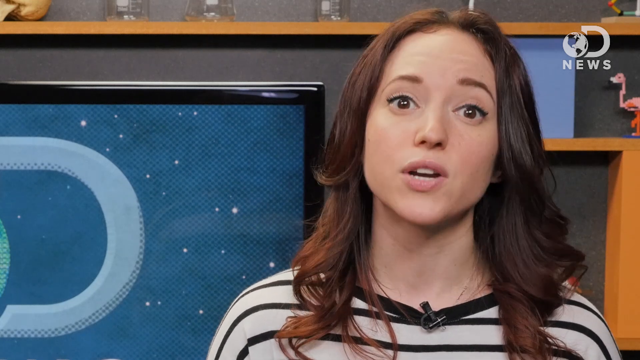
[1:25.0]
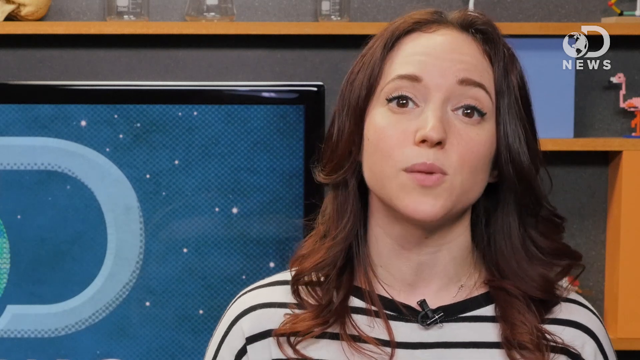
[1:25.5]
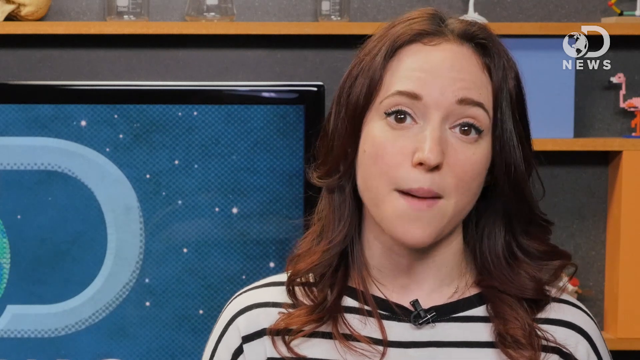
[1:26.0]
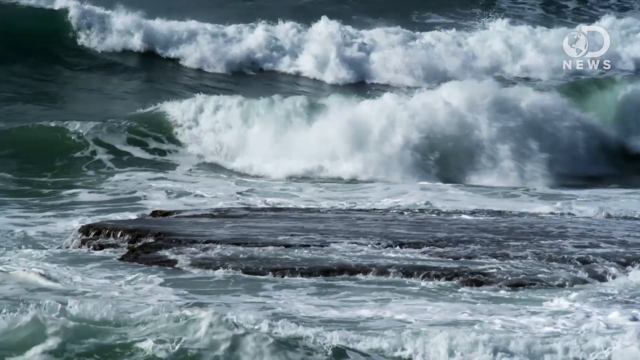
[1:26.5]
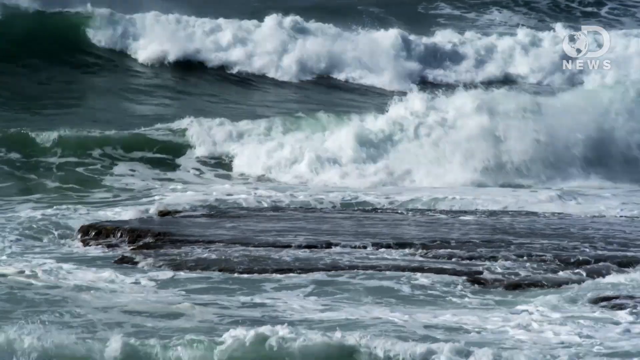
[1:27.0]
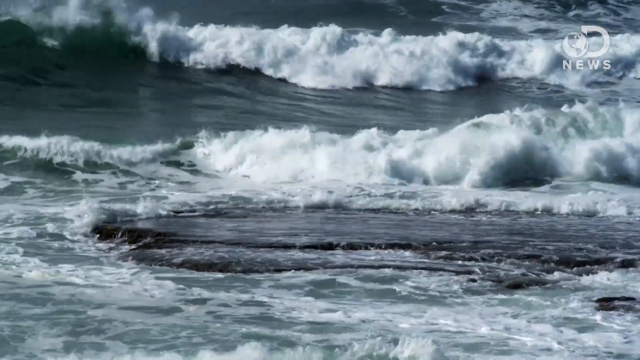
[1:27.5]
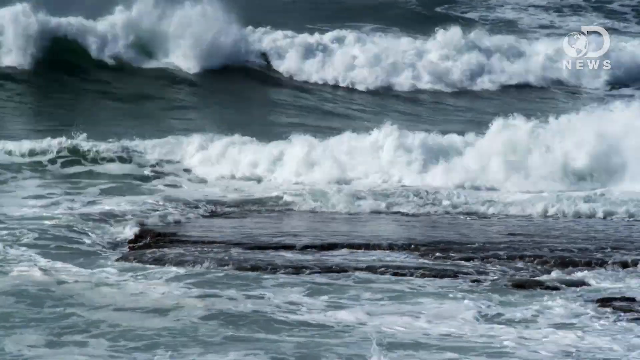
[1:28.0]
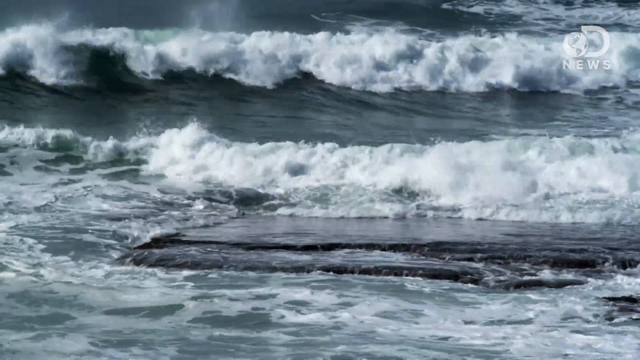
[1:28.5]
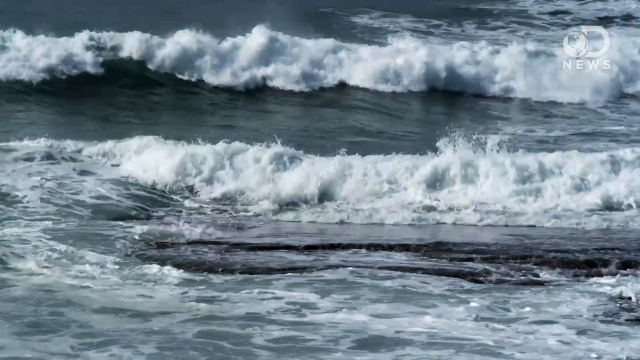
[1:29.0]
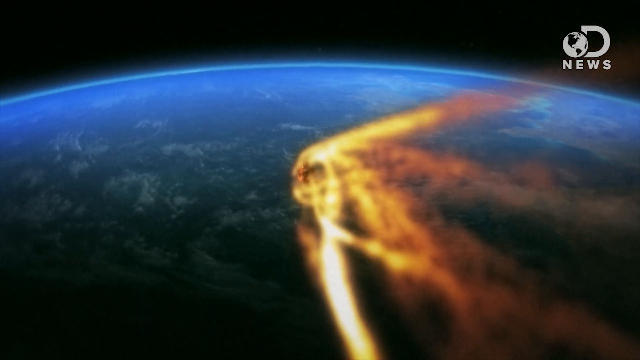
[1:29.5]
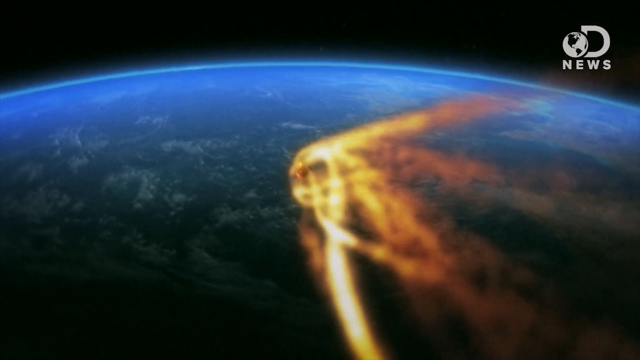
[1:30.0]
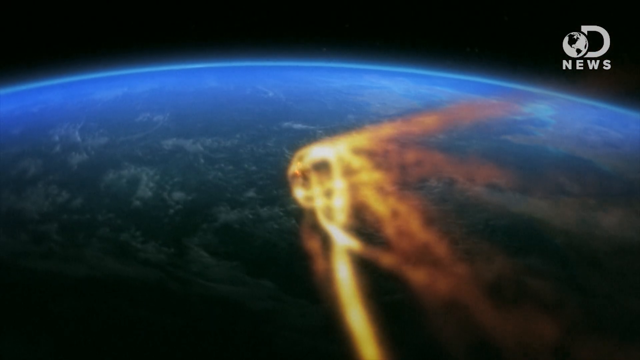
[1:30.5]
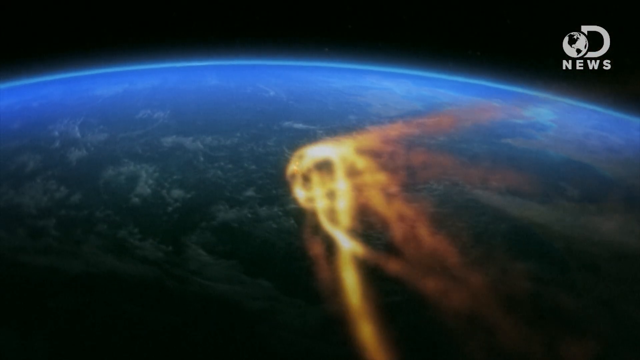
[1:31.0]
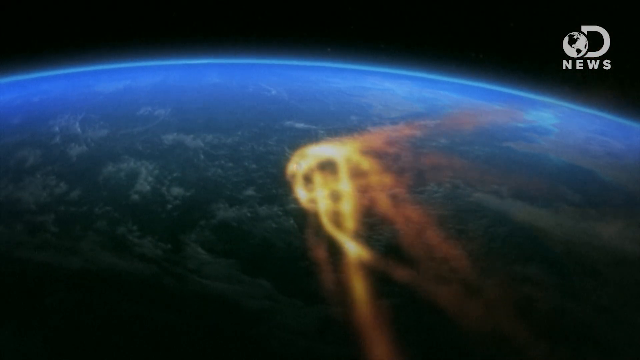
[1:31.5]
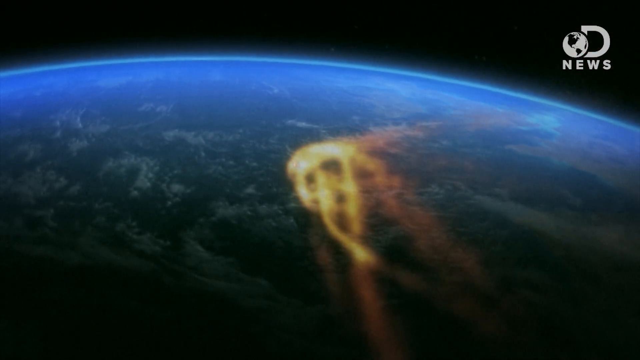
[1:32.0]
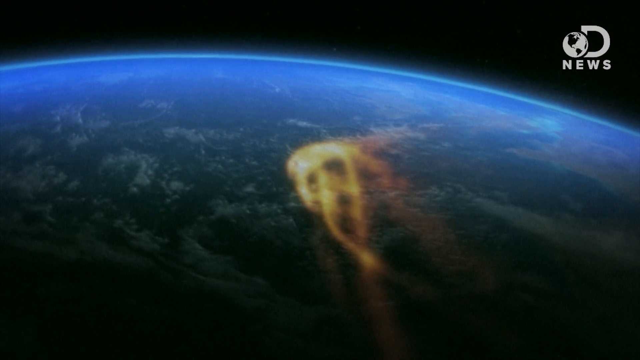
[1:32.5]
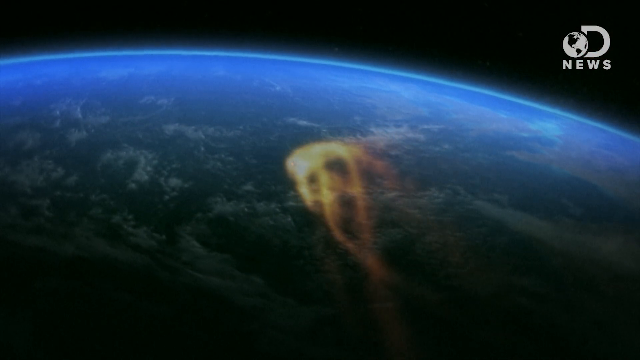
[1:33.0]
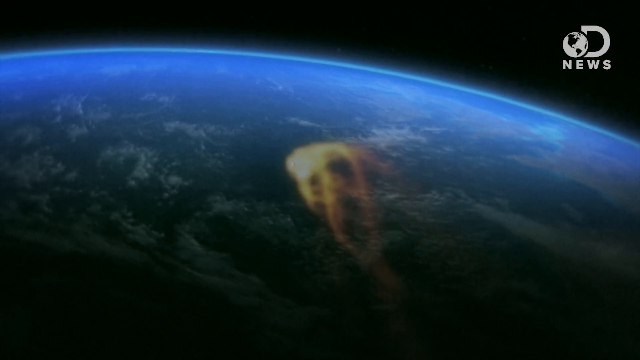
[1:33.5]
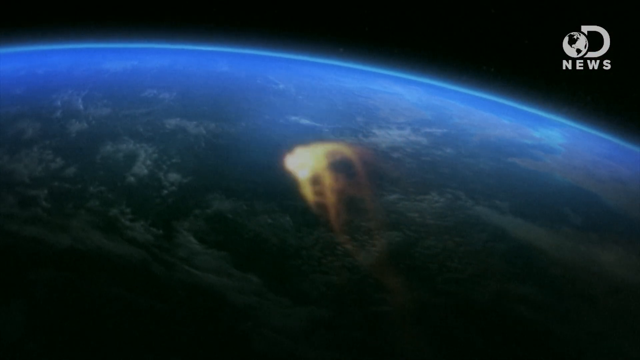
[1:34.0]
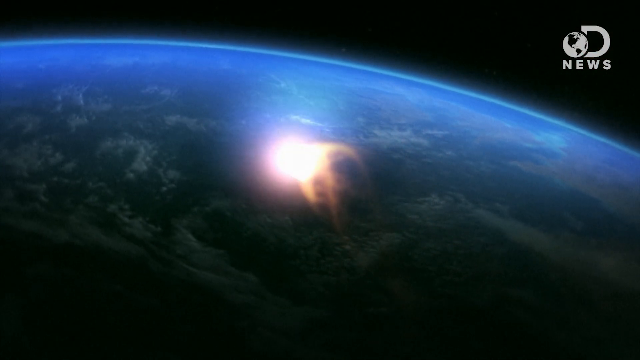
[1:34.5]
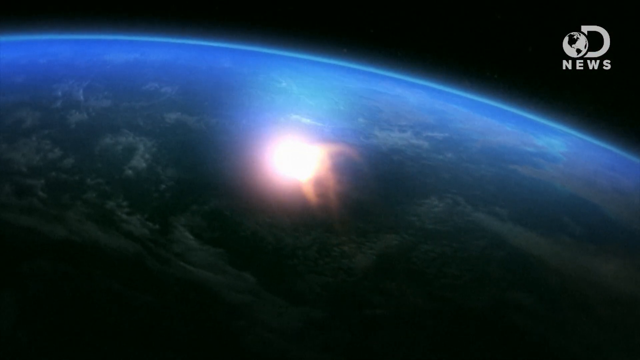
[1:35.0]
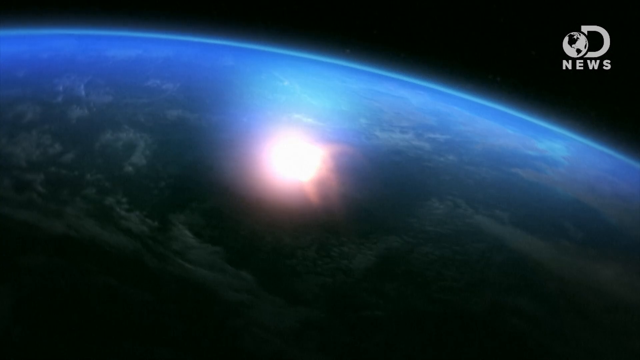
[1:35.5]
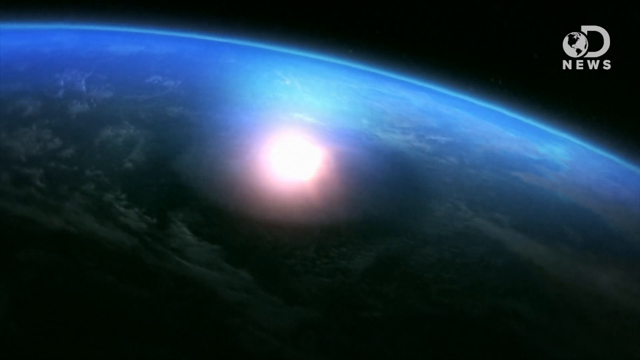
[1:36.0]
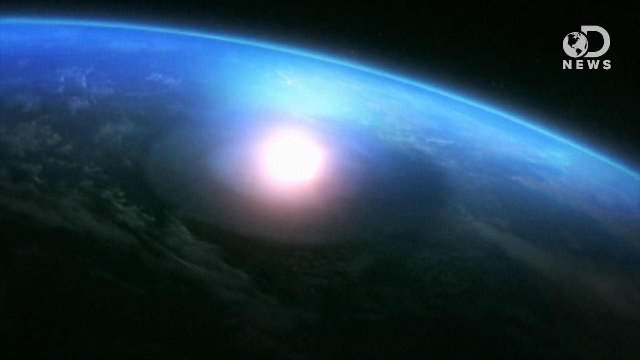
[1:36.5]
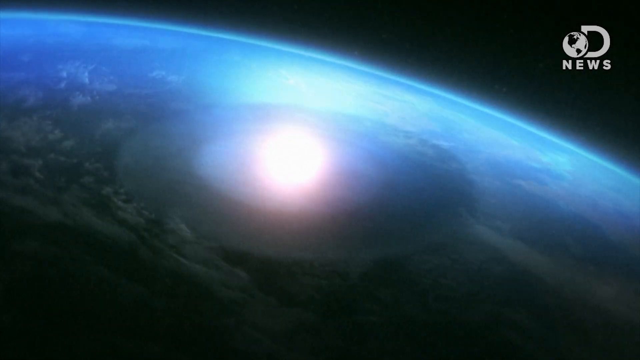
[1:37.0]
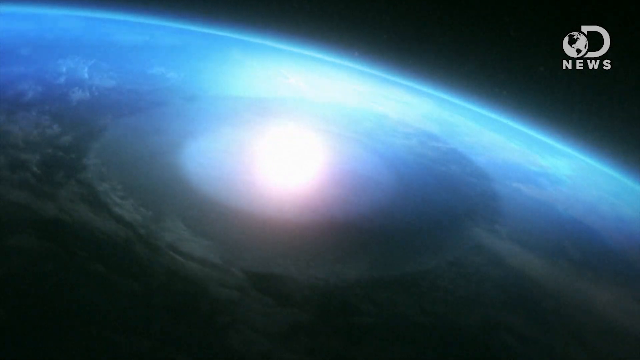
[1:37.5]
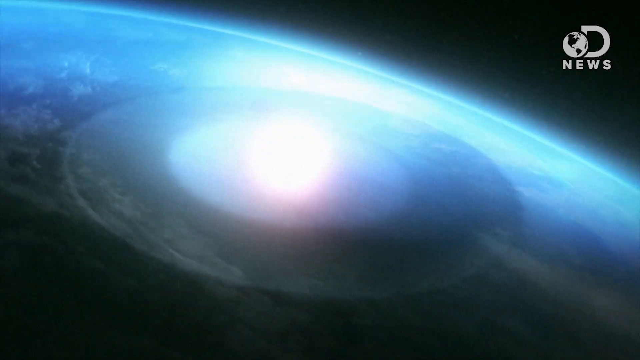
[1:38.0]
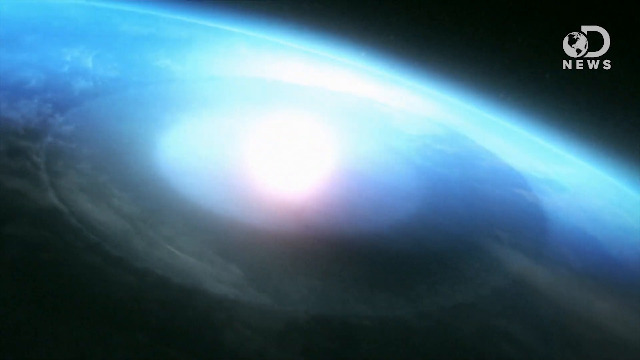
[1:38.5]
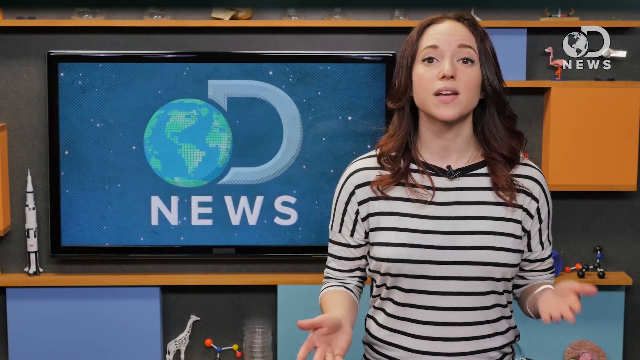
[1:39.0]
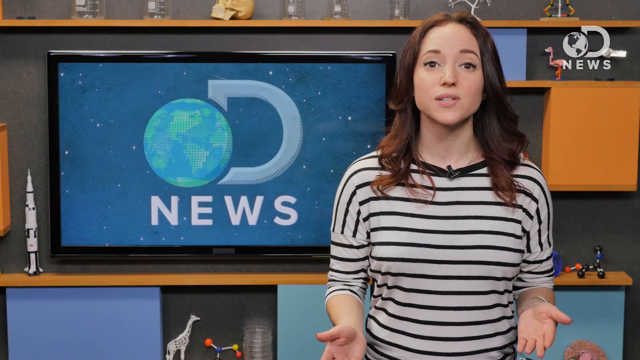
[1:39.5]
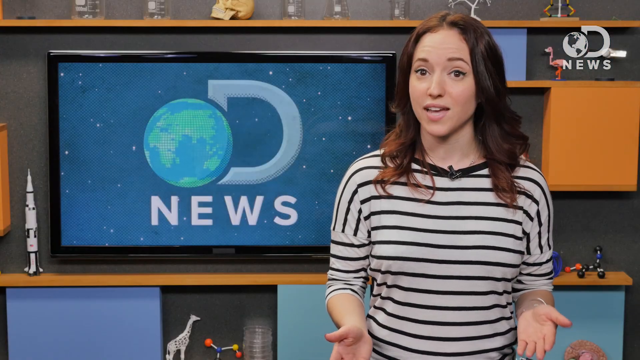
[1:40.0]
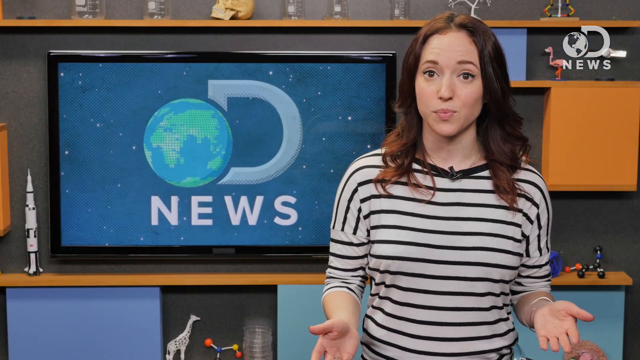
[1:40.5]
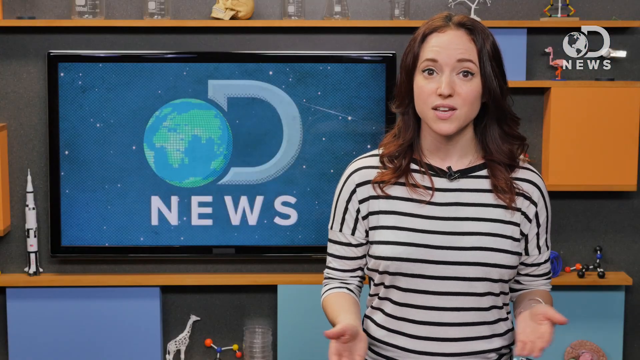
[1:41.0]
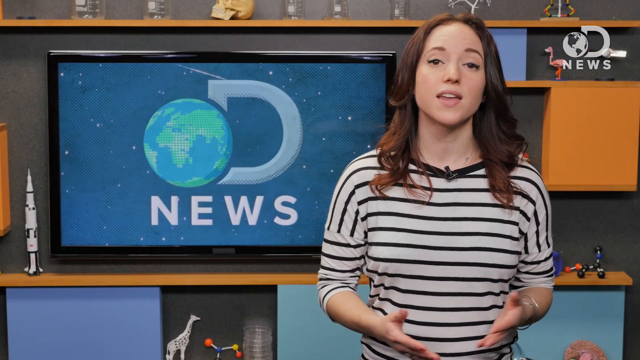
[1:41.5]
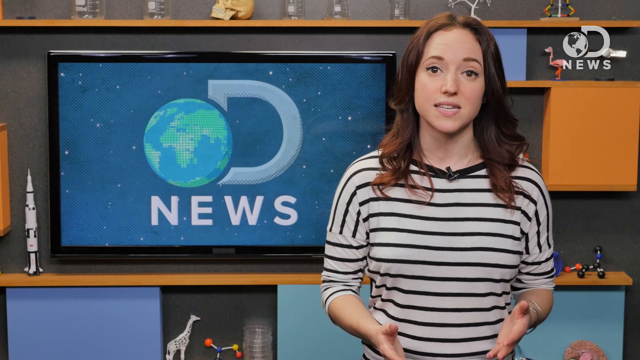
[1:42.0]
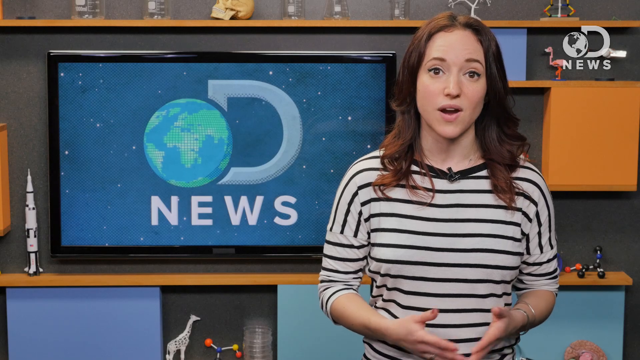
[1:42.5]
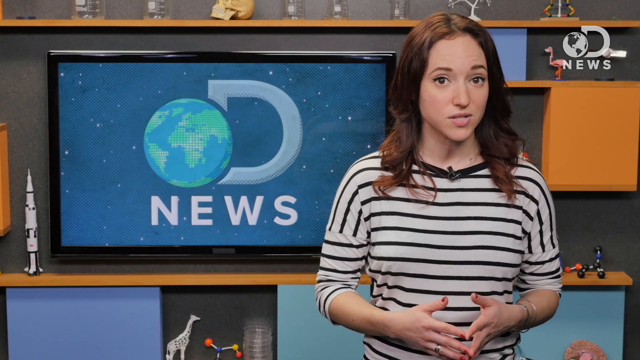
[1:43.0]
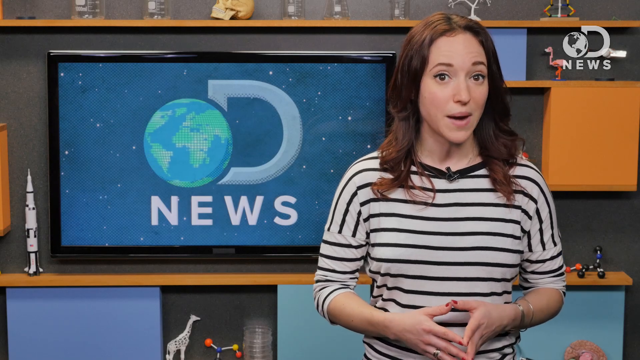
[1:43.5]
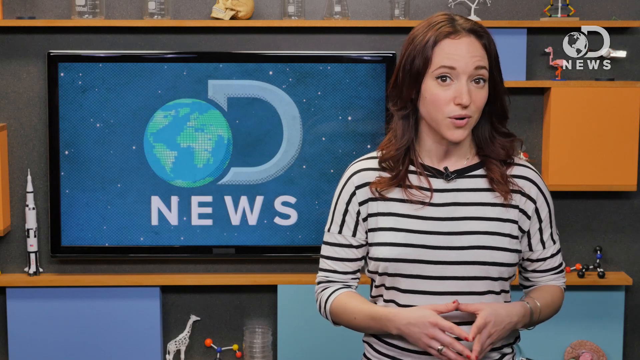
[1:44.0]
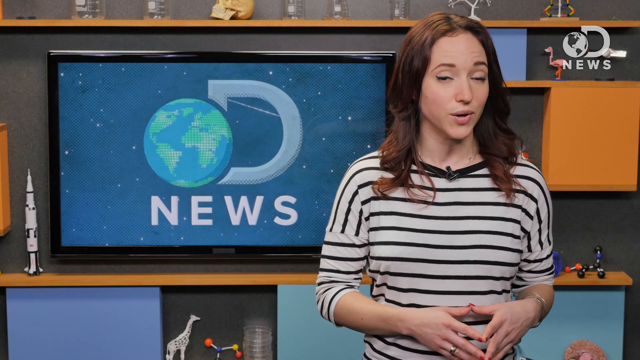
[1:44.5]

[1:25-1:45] The presenter is briefly shown speaking in the studio with the same backdrop. The view switches to a video of rolling white waves in a large body of water, then to an animated video of the surface of a planet. The planet looks blue, with white spots that look like clouds, and behind it is black. Yellow streaks of light show on the planet's surface, and after a few seconds they turn into a ball of light that grows and looks as though it is spreading over the surface. The view then switches back to a wider view of the presenter standing in front of the same backdrop in the same position, gesturing with her hands as she continues to speak. At the very end of the video, a panel shows three small video images. At the top it says "subscribe!" The top thumbnail shows her, and the other two show scenes from outer space. The panel's backdrop is blue with what looks like stars in it.